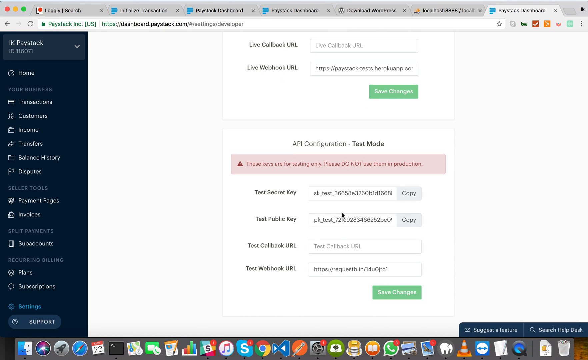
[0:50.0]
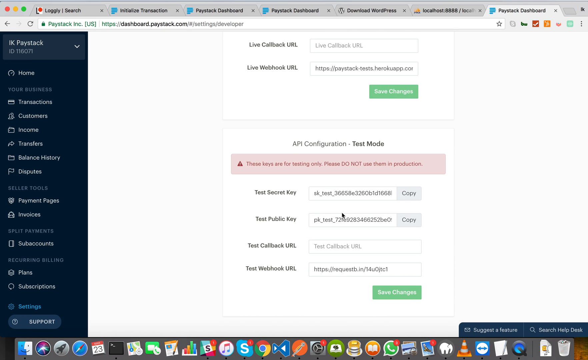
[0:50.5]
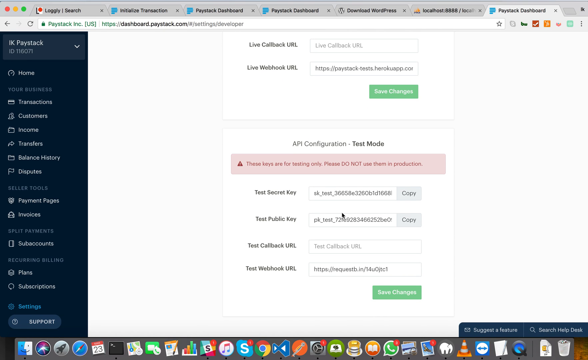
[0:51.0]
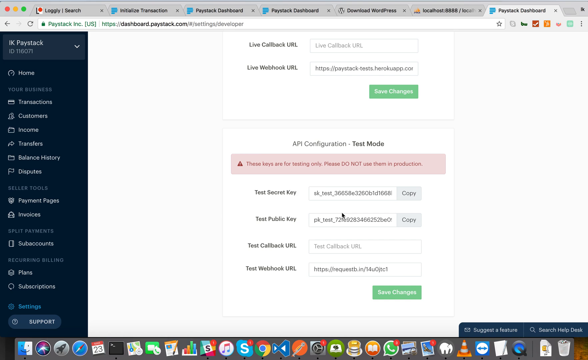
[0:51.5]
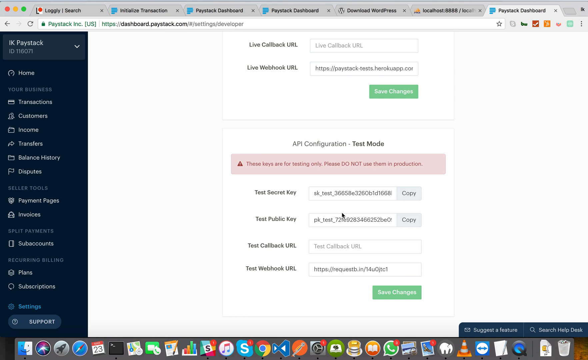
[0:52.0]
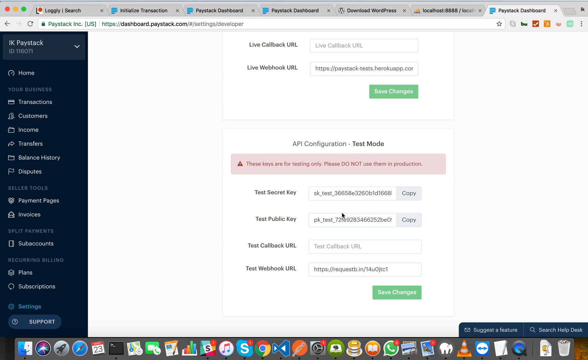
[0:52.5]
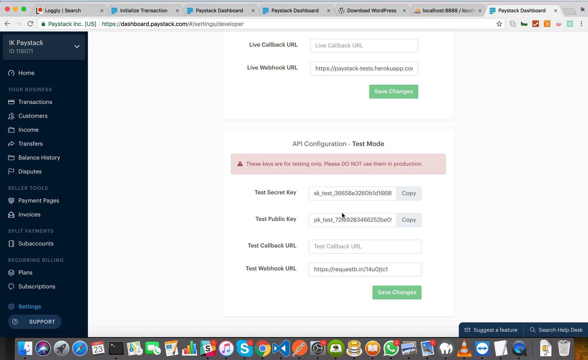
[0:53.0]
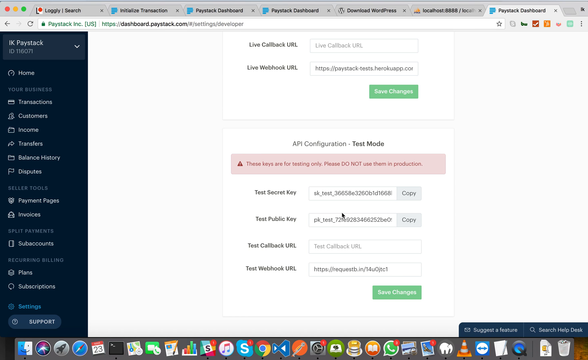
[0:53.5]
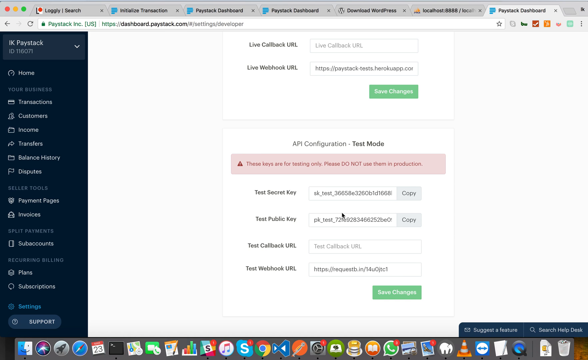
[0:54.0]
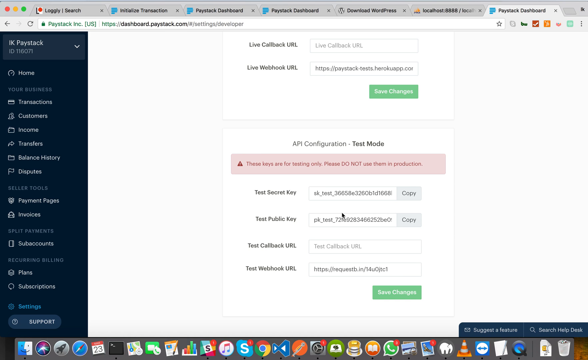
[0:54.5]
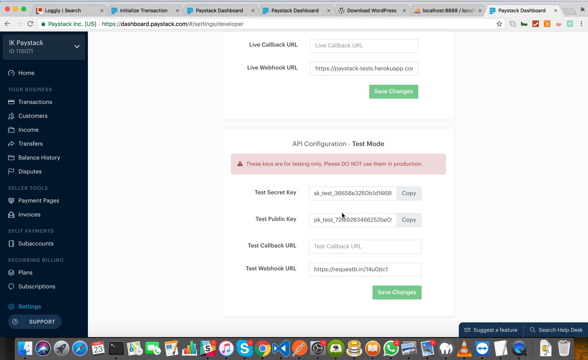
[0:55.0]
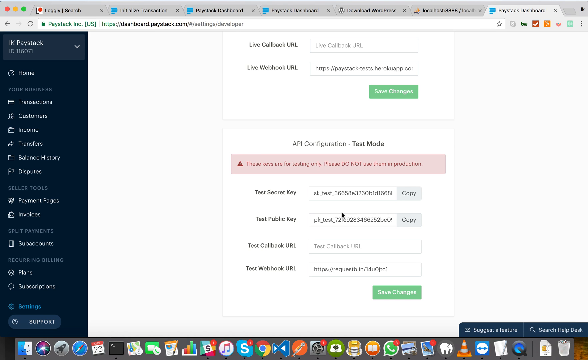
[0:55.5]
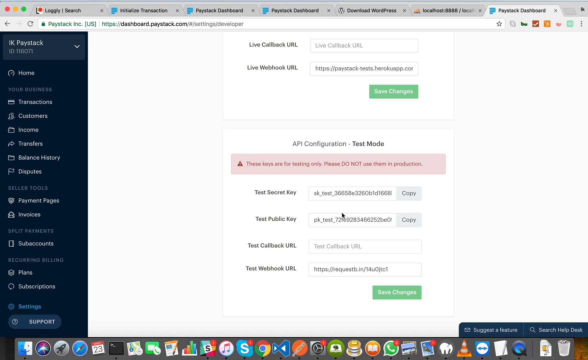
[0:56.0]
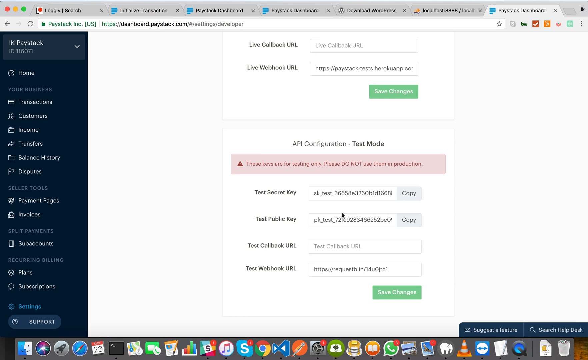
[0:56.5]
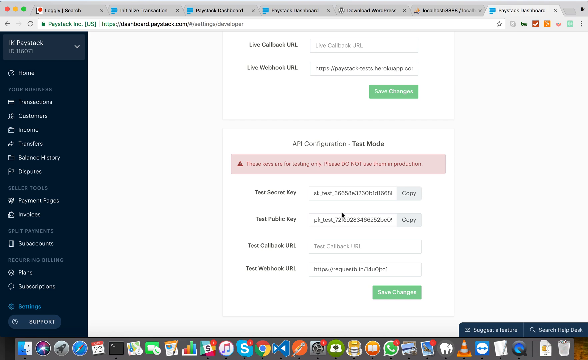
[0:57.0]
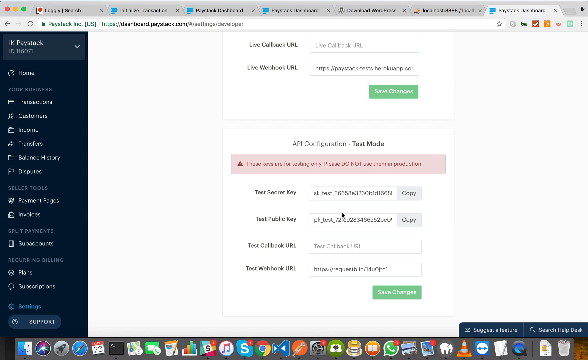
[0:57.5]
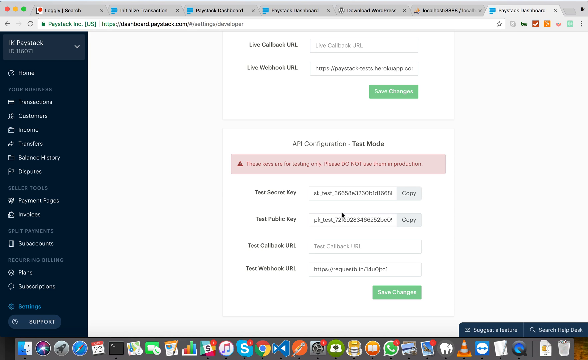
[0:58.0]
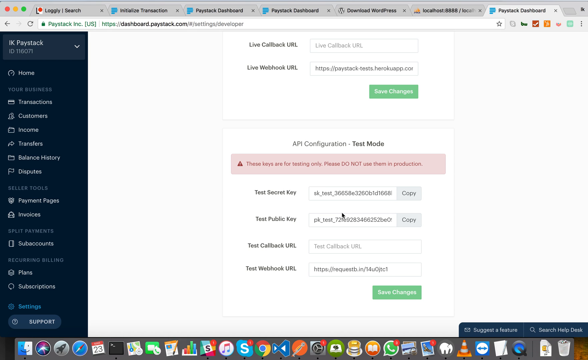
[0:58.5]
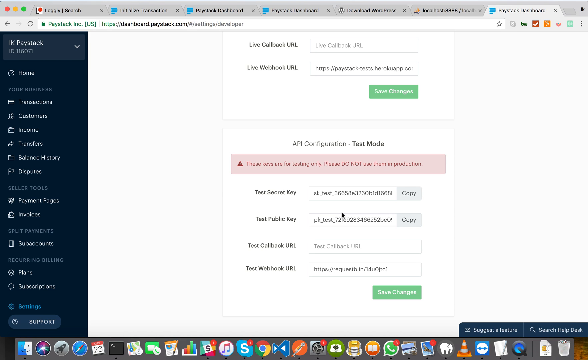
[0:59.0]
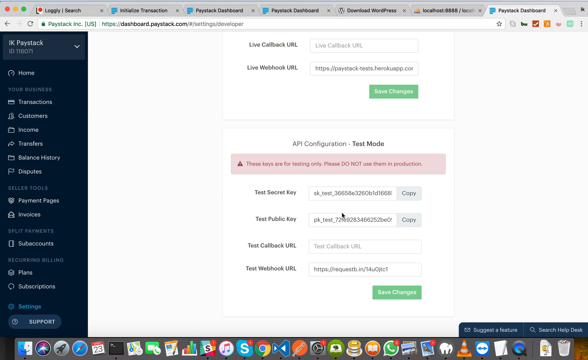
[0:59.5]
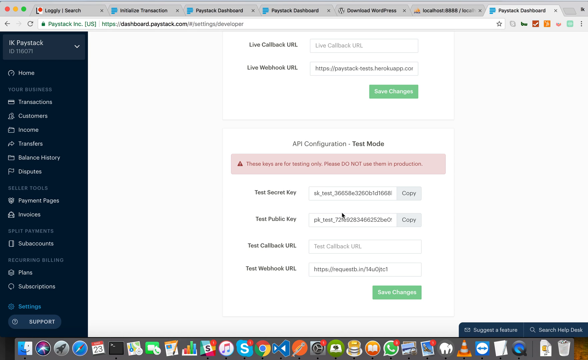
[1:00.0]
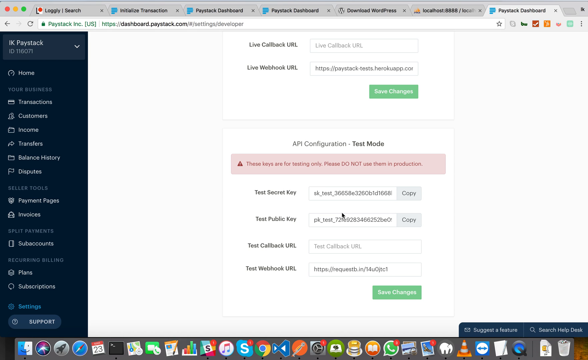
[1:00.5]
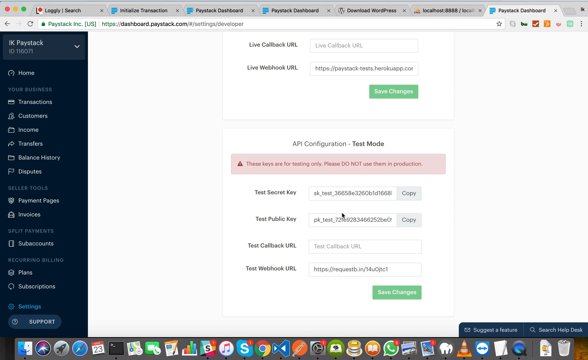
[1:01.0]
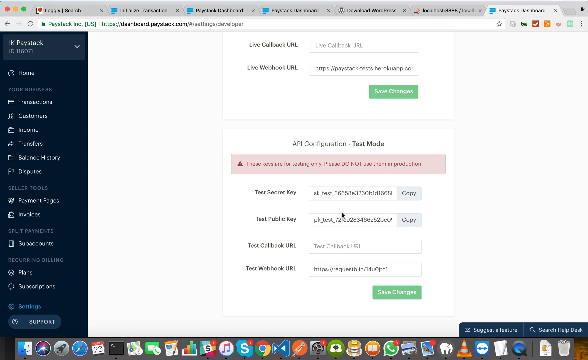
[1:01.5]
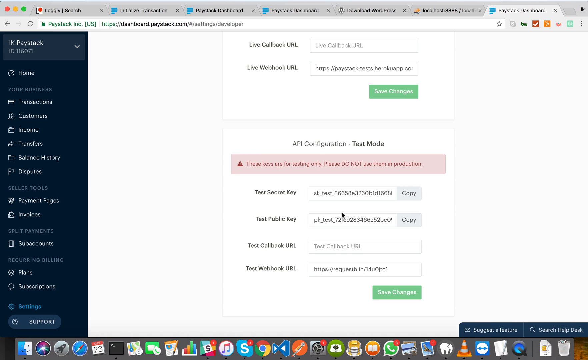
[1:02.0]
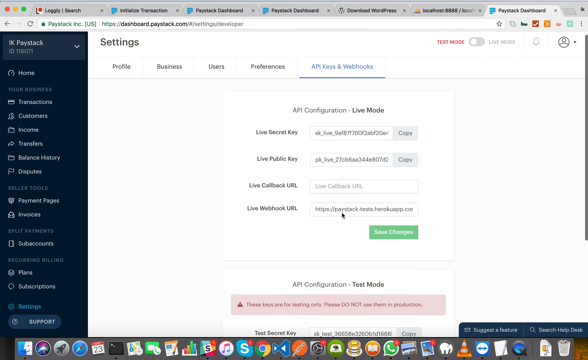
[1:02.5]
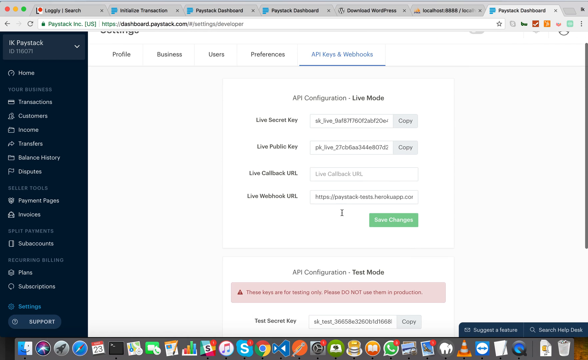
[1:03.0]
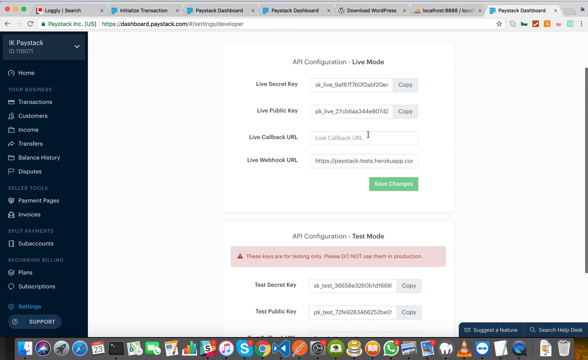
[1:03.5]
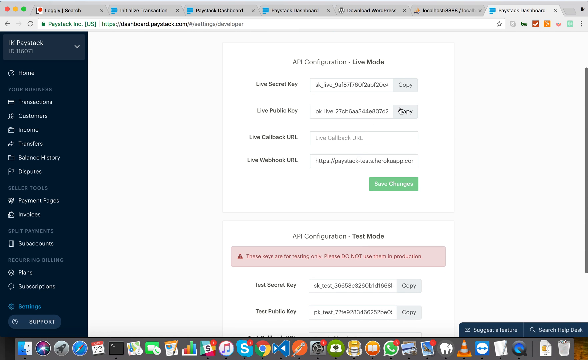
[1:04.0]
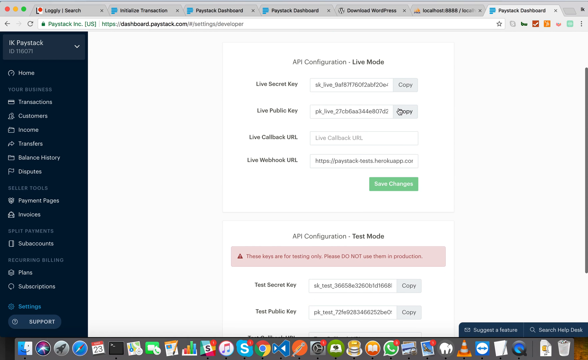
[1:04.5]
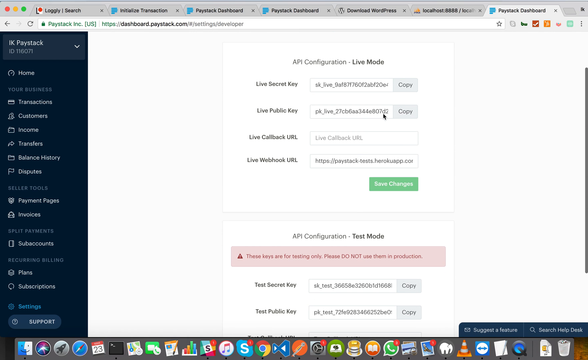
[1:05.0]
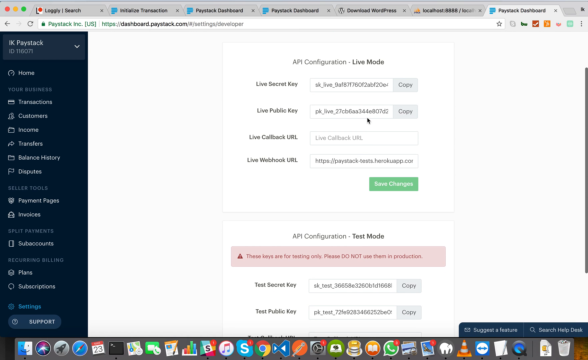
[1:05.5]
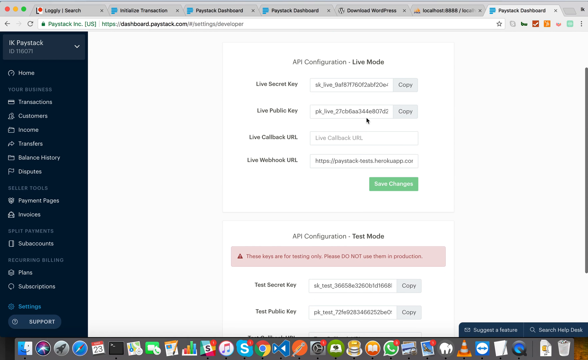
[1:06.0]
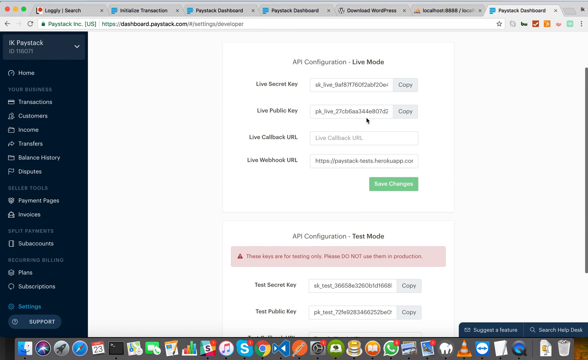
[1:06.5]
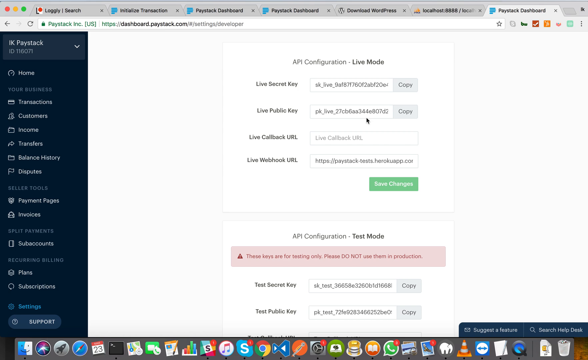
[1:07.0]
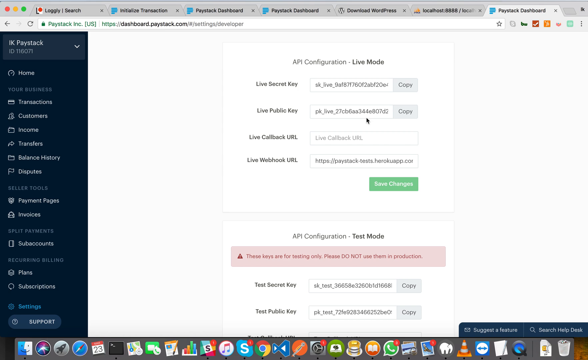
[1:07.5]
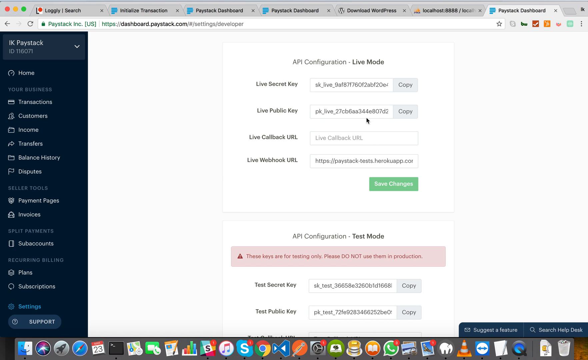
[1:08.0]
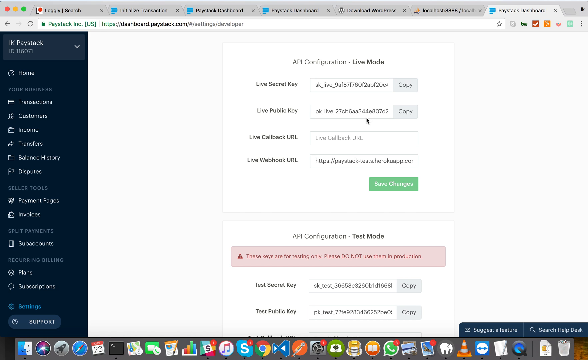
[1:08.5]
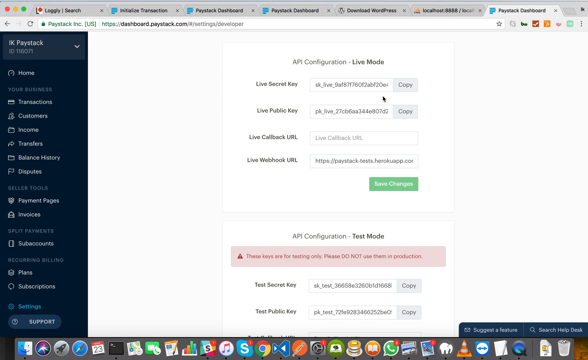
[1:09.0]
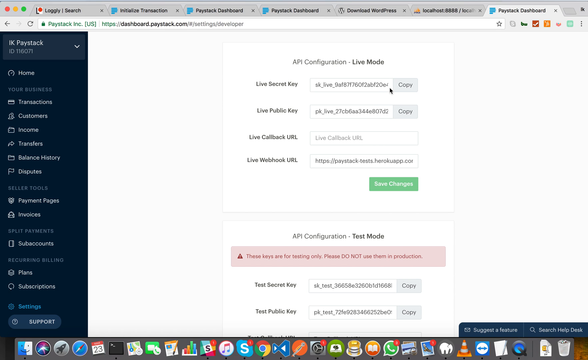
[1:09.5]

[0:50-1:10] The API configuration test mode page for IK Paystack is on screen. The page has a list of menu items down the left side and other options across the top. Under the API configuration it says "these keys are for testing only. Please do not use them in production." The options read test secret key, test public key, test callback URL, and test webhook URL. The cursor moves around the API area of the screen and goes up to around where the API live settings are, with the API test settings underneath them.